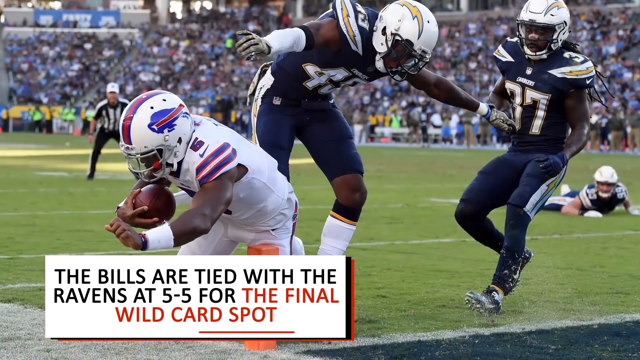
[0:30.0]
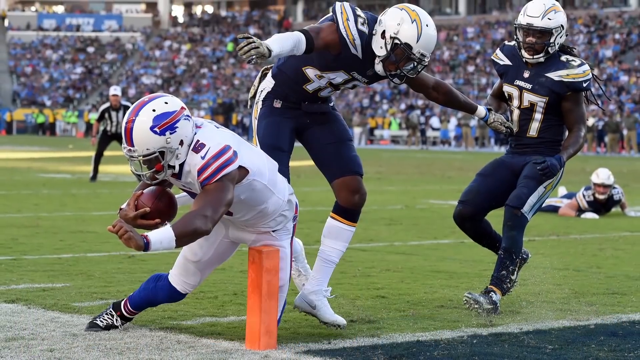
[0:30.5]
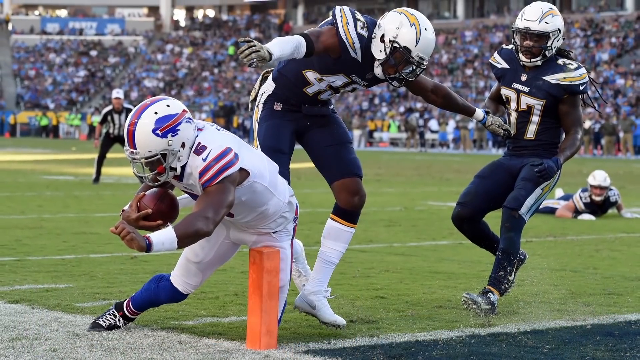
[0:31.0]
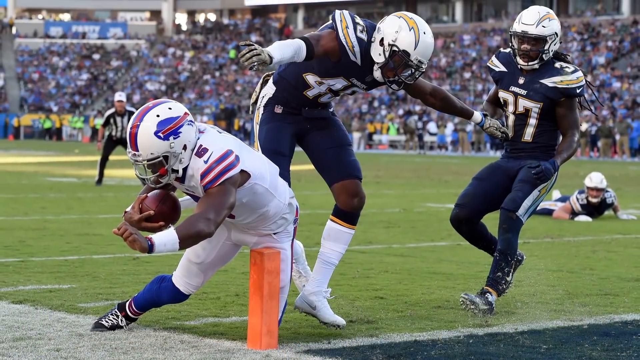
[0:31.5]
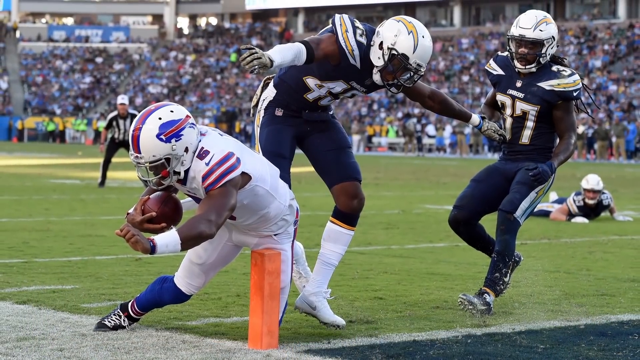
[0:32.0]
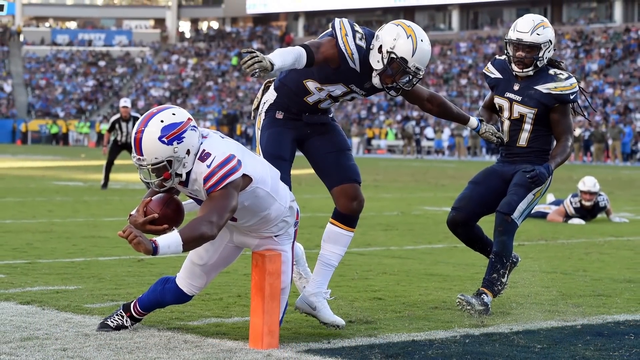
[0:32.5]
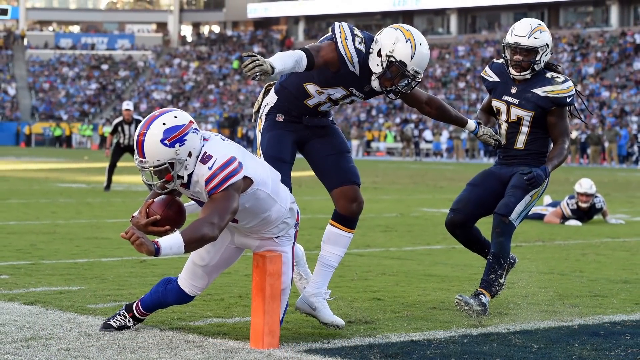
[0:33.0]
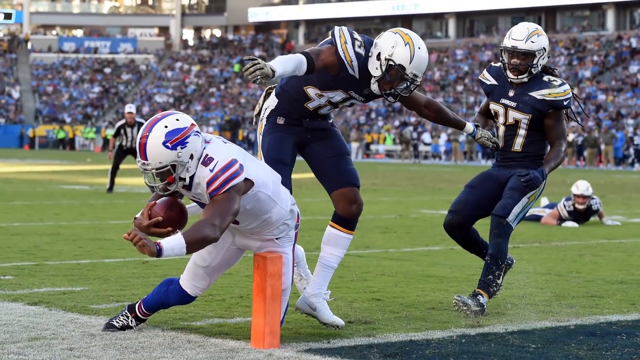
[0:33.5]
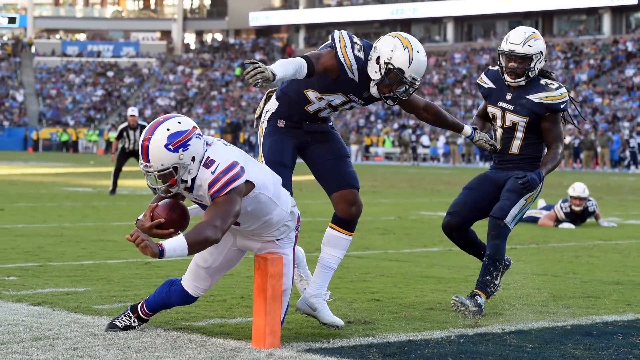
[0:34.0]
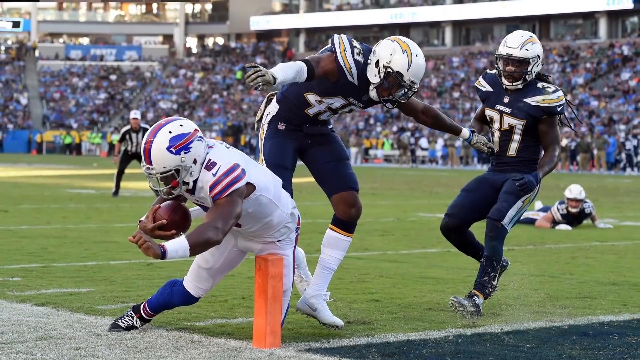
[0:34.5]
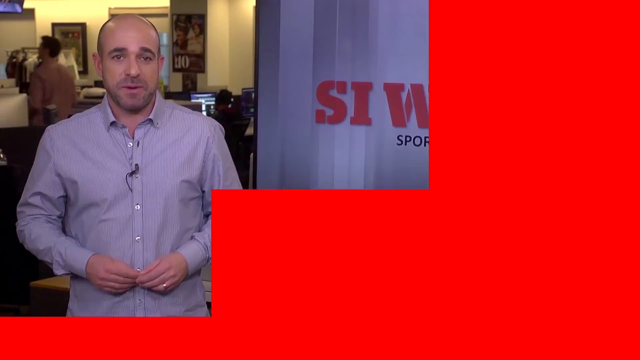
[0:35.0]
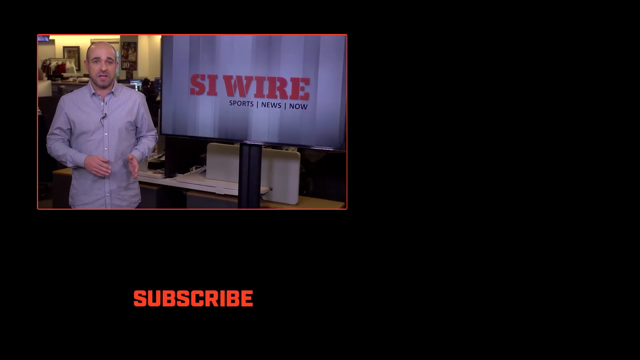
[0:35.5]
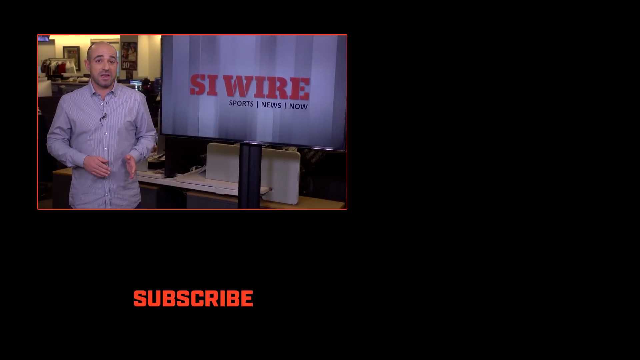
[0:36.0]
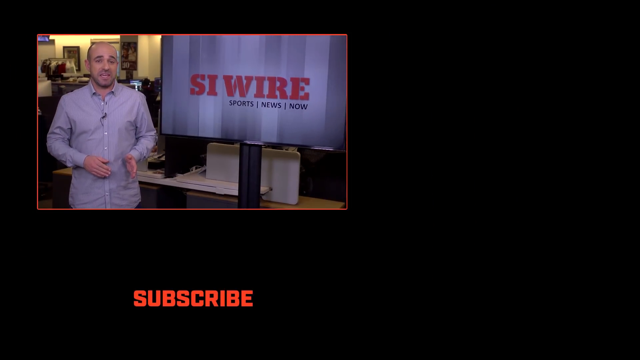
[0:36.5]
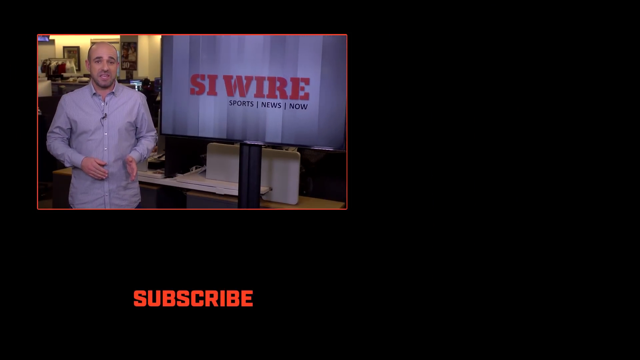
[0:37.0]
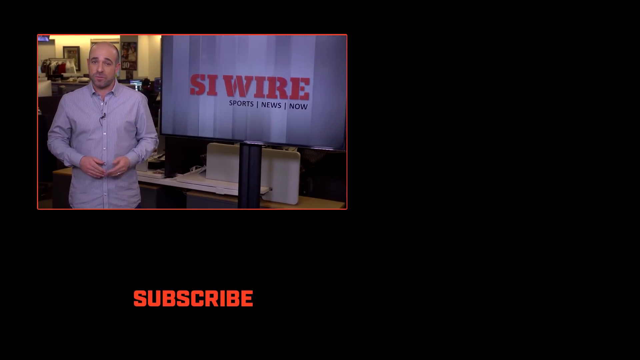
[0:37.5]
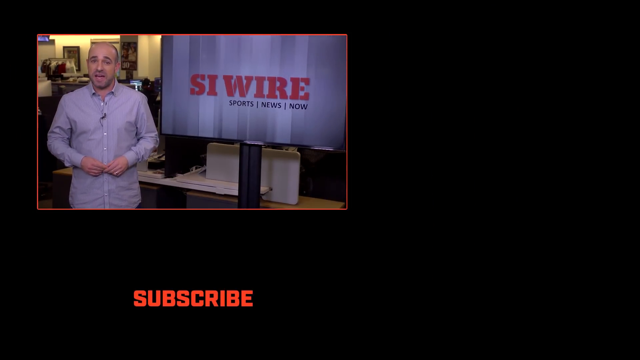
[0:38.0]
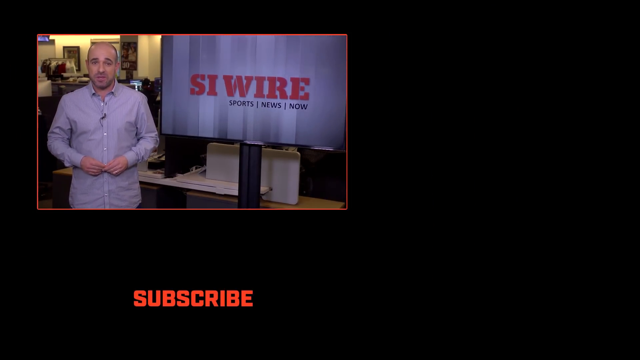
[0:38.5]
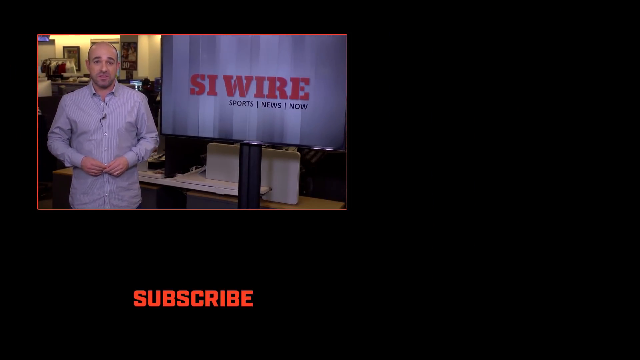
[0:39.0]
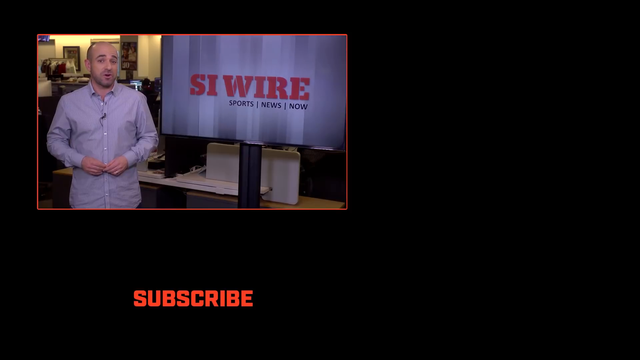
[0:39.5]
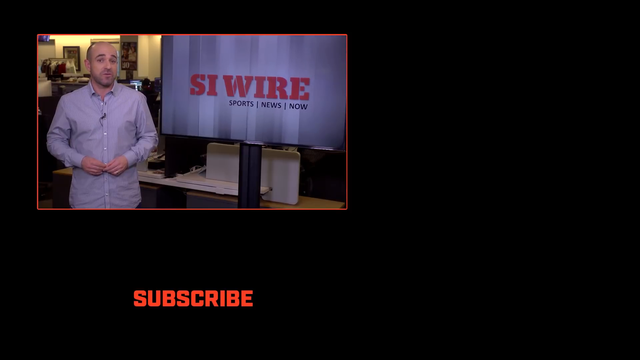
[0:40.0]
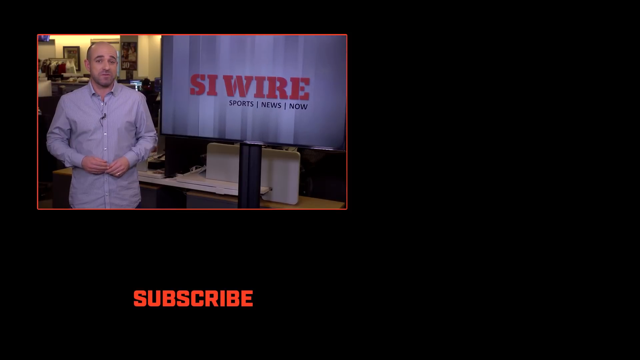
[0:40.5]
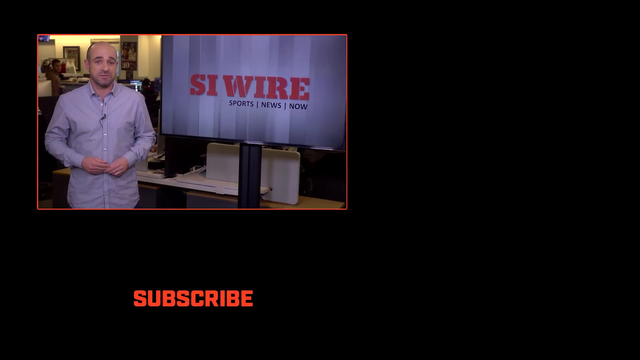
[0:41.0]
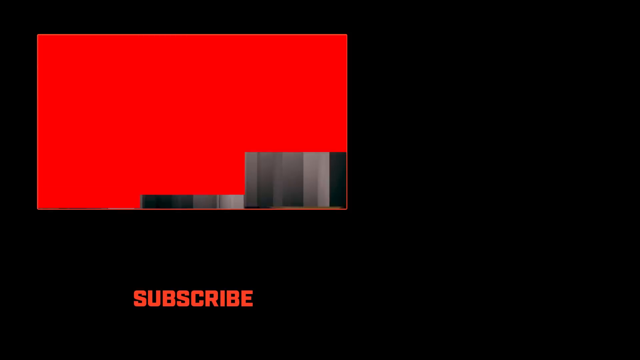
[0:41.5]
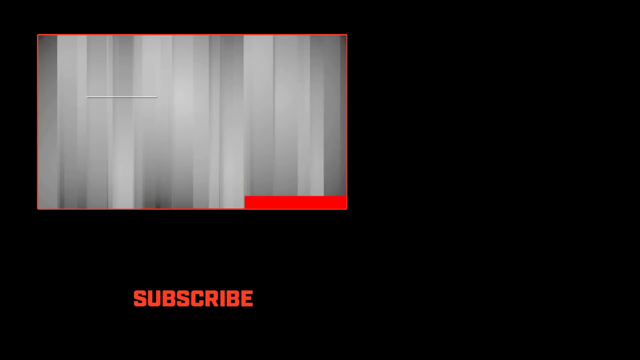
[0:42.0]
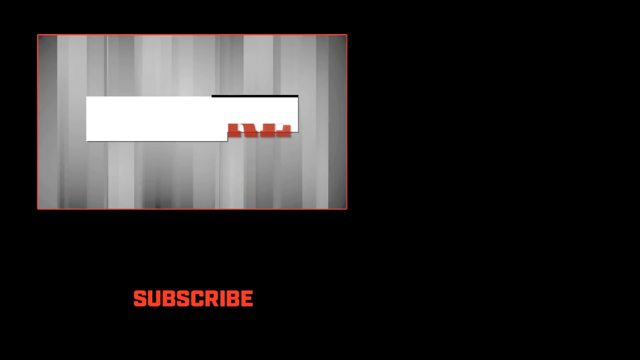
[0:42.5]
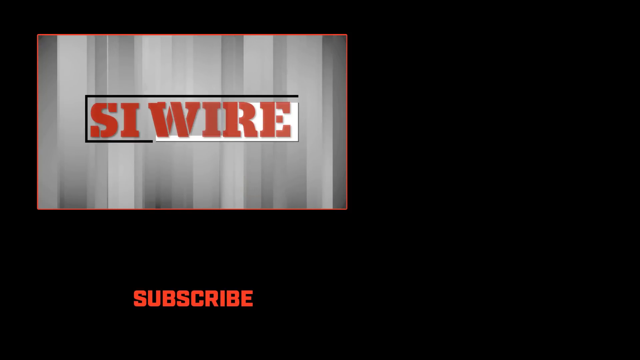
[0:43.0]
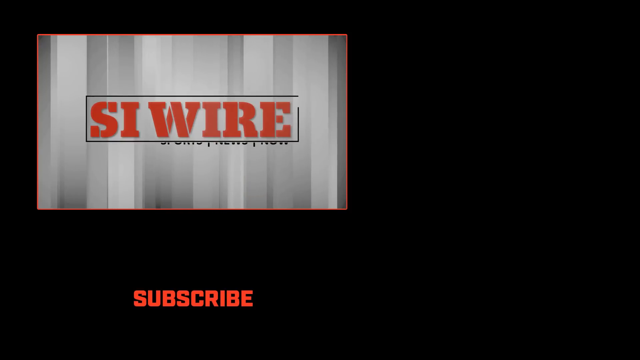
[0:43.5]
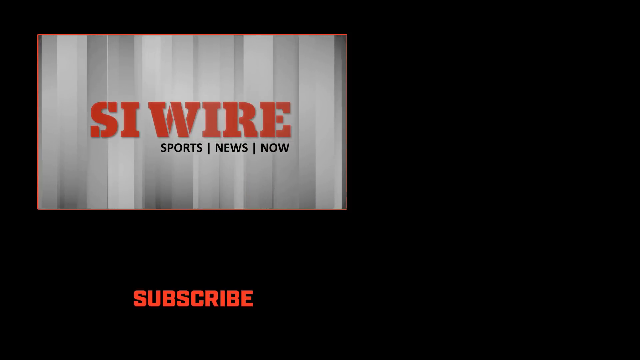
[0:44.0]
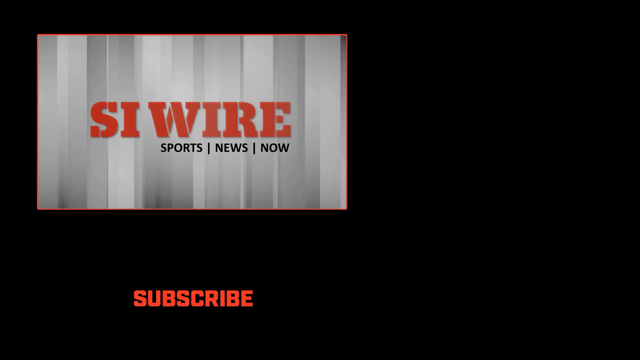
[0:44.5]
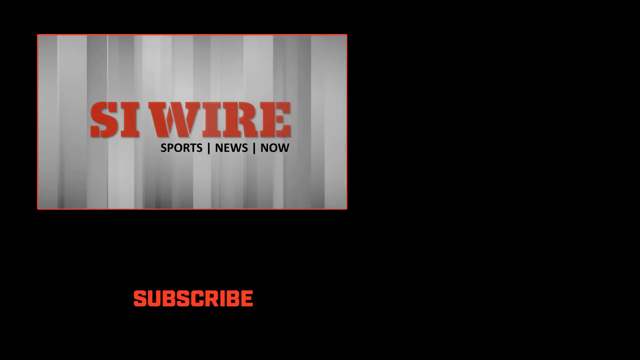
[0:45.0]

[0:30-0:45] A picture shows four football players, three in navy blue uniforms and one in a white uniform. The player in the white uniform holds a football in his right hand. One player in a navy blue uniform is in the background and appears to be lying down on the grass football field. On the bottom right, a message reads "The Bills are tied with the Ravens at 5-5 for the final wild card spot." The scene briefly transitions with red bars and then shows a snippet of a video of a man in a gray shirt next to a TV screen that says "SI WIRE Sports News Now," with a dark black background. On the bottom, the word "Subscribe" is colored red. The snippet then shows red bars, followed by a message reading "SI Wire Sports News Now" on a gray background.